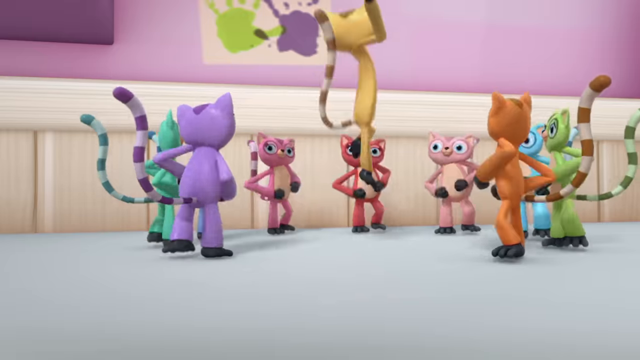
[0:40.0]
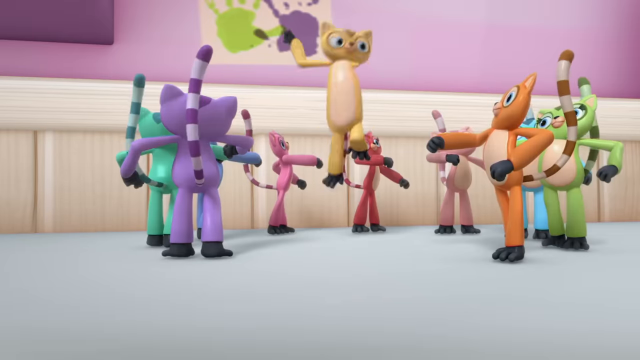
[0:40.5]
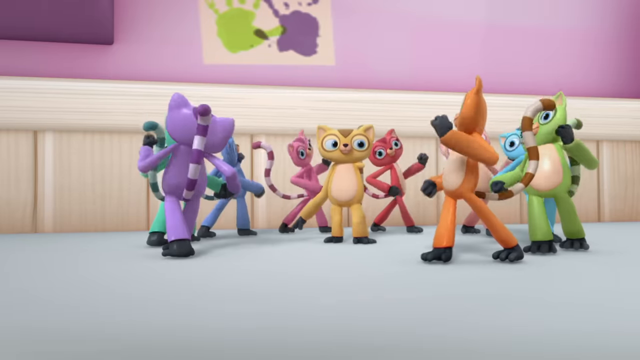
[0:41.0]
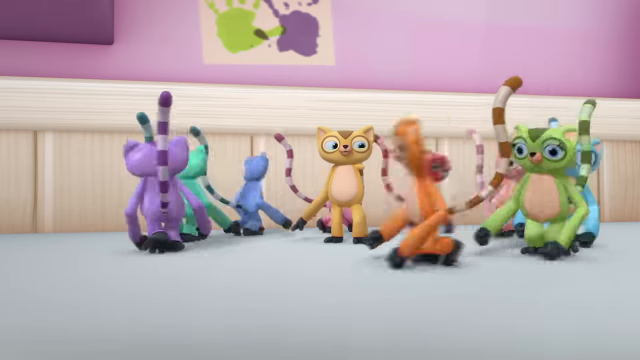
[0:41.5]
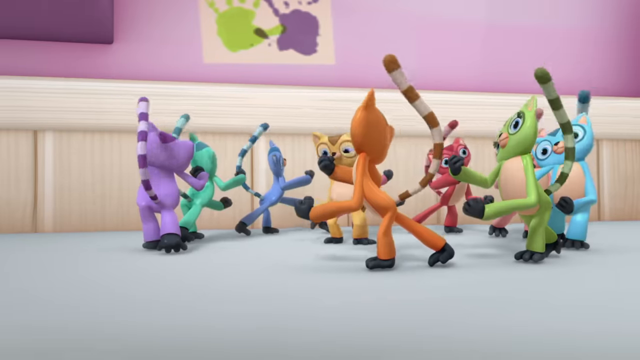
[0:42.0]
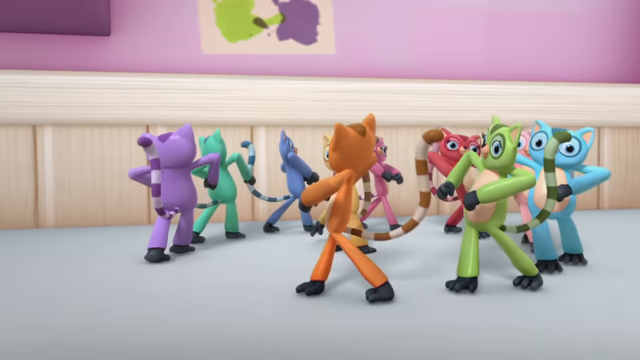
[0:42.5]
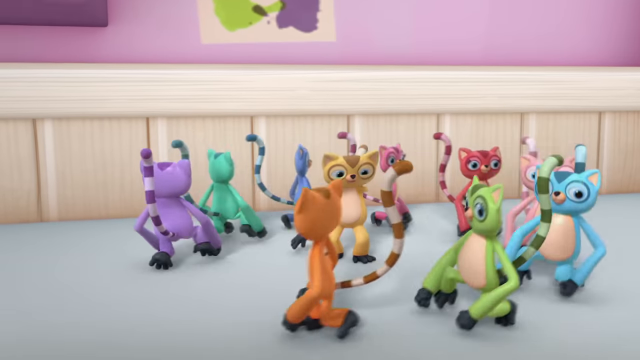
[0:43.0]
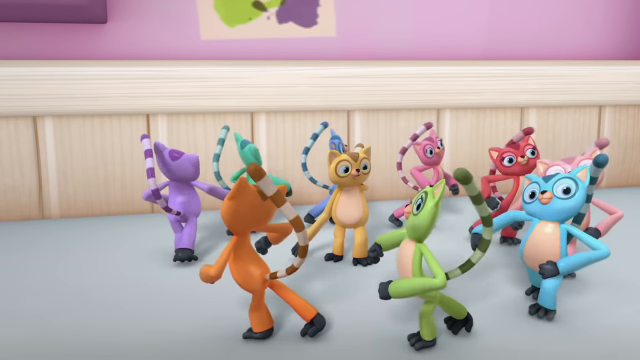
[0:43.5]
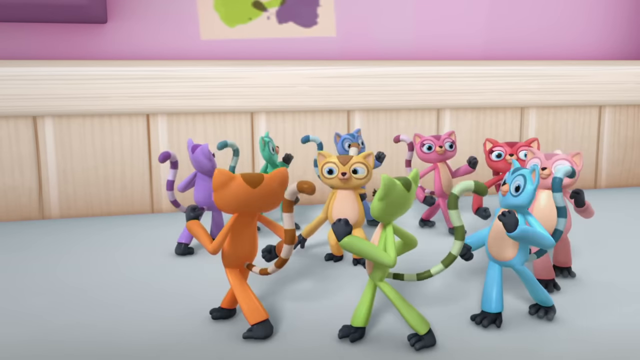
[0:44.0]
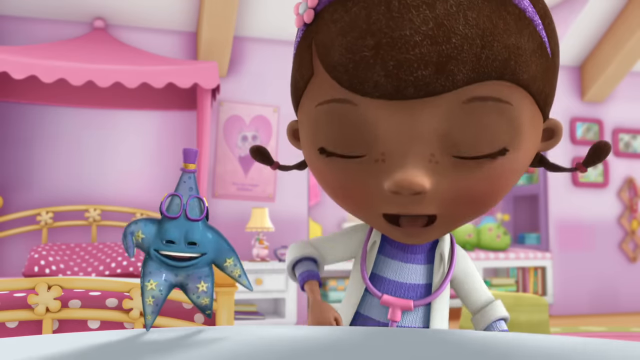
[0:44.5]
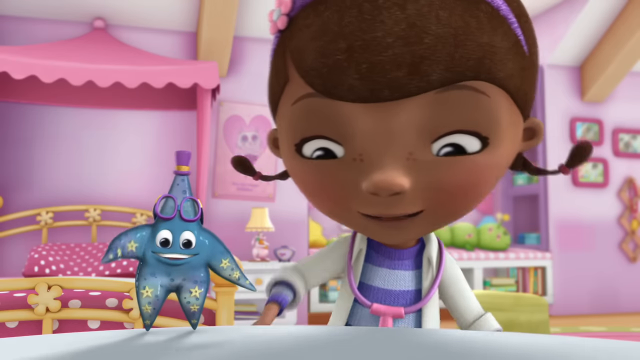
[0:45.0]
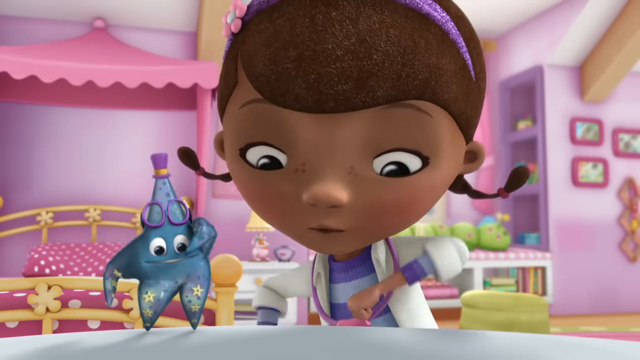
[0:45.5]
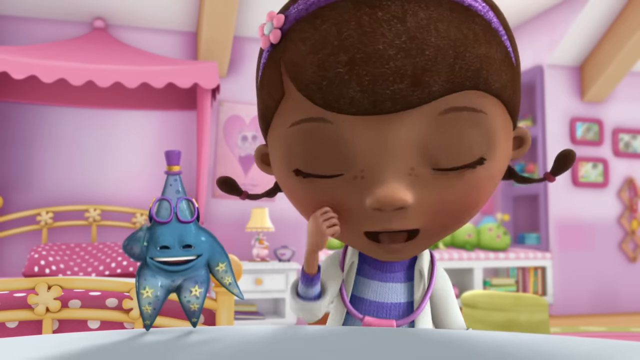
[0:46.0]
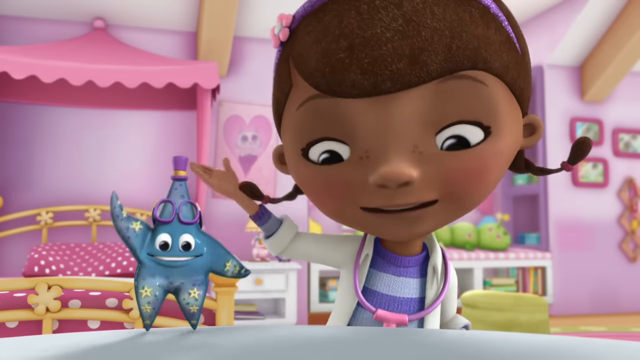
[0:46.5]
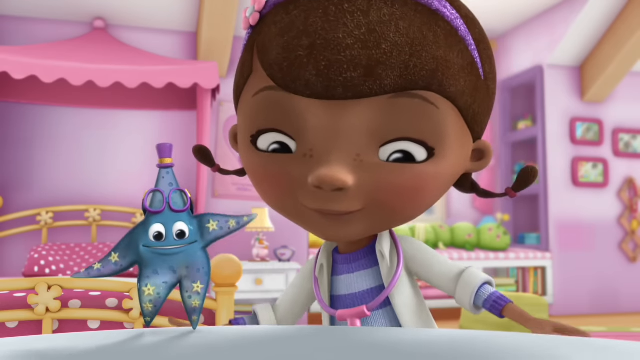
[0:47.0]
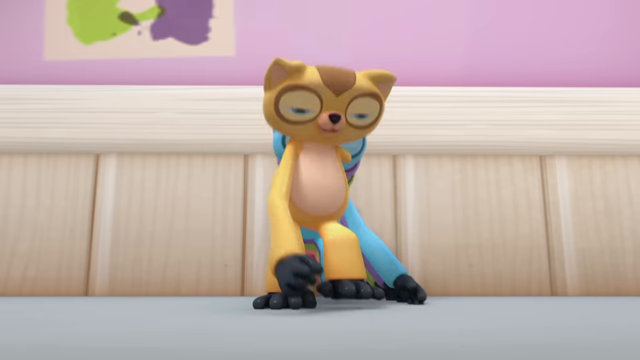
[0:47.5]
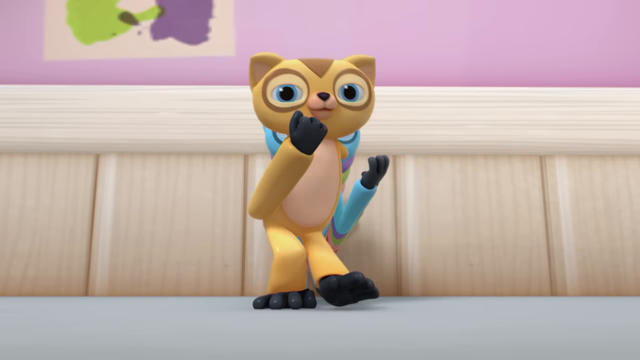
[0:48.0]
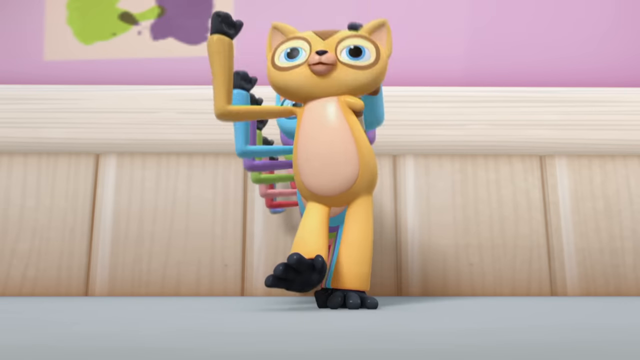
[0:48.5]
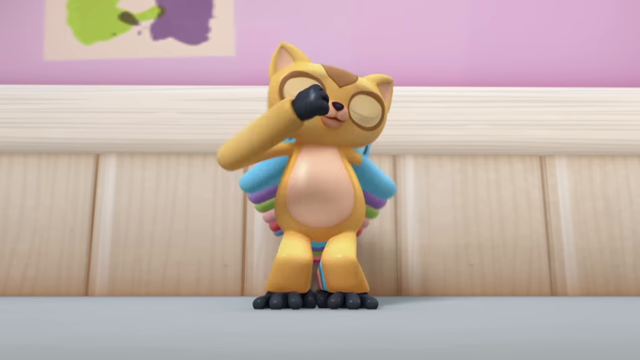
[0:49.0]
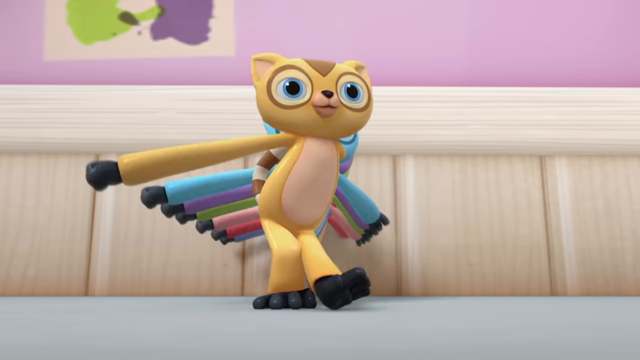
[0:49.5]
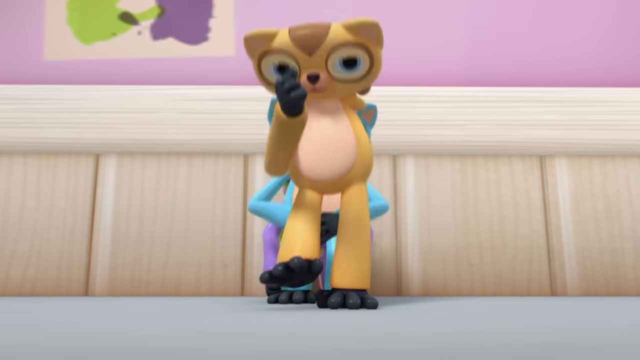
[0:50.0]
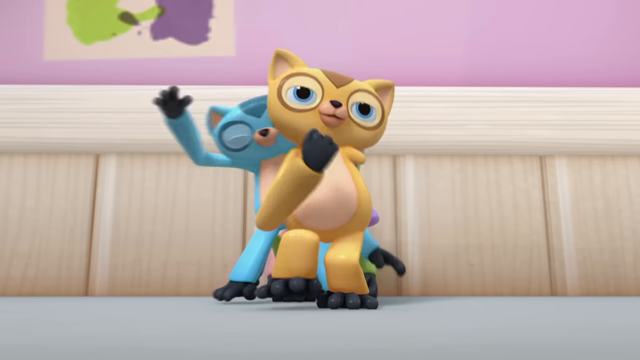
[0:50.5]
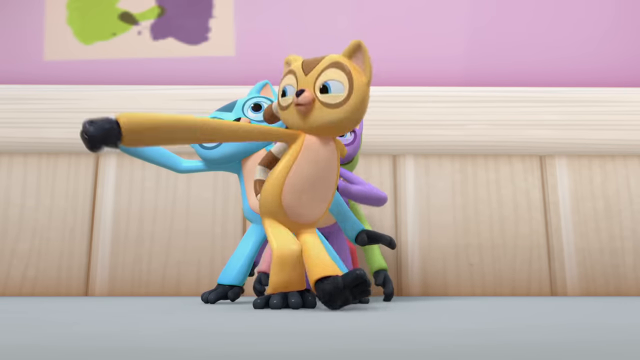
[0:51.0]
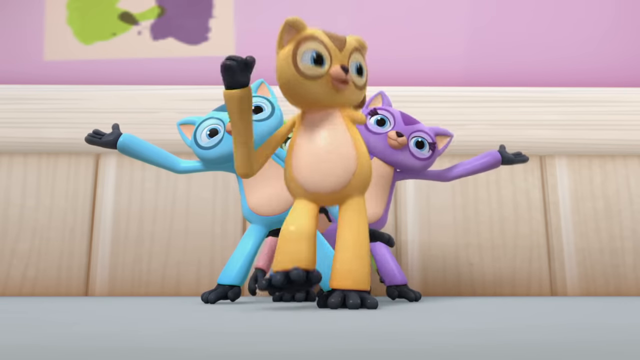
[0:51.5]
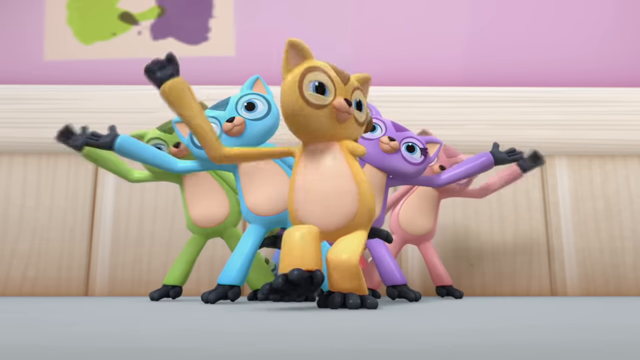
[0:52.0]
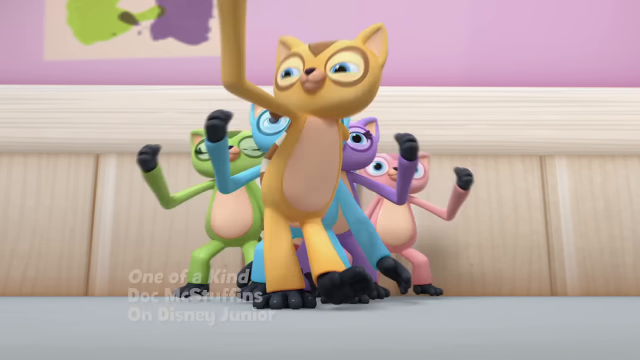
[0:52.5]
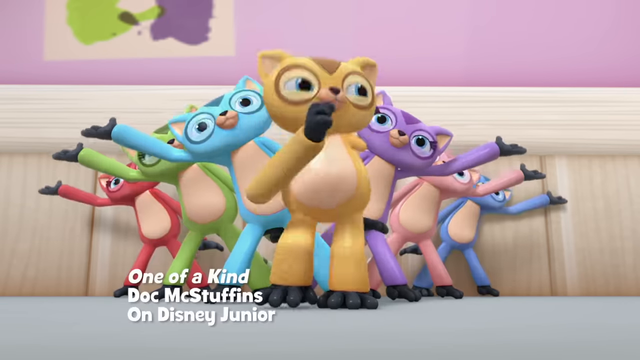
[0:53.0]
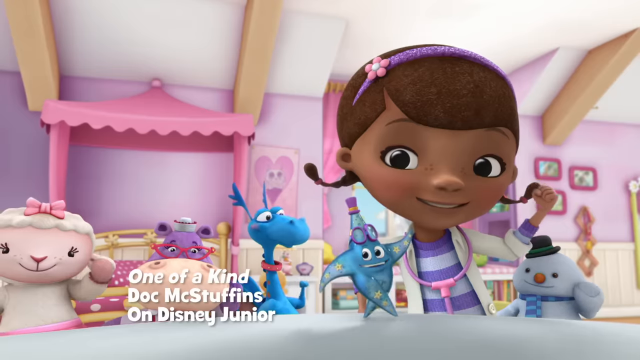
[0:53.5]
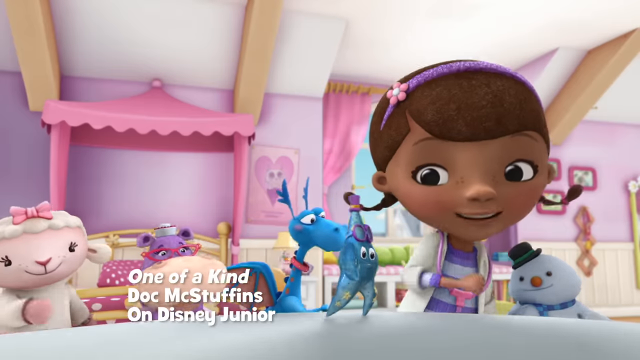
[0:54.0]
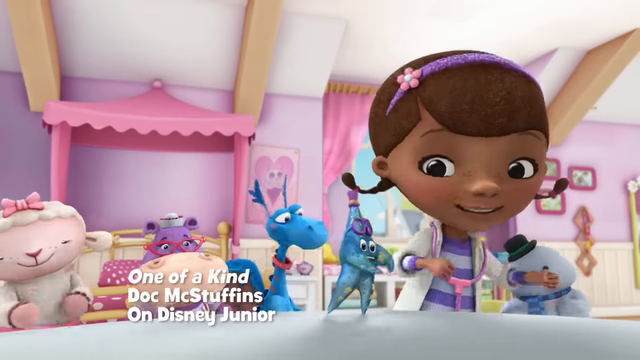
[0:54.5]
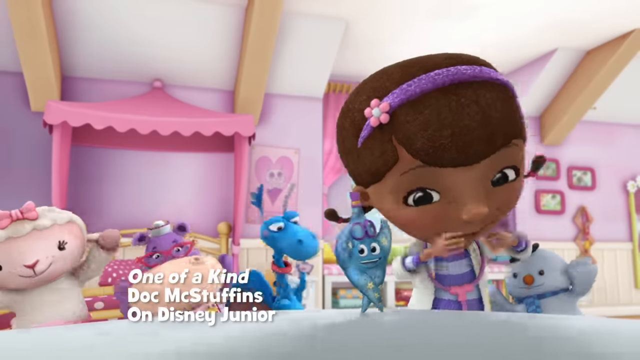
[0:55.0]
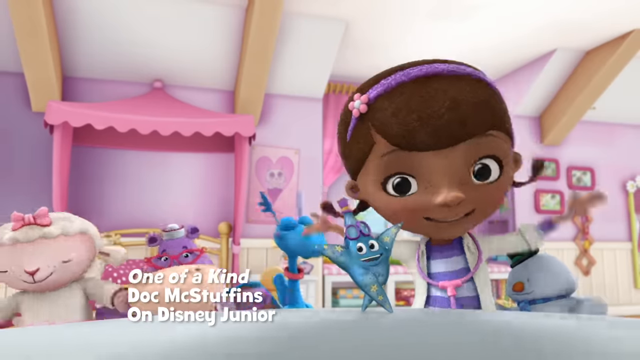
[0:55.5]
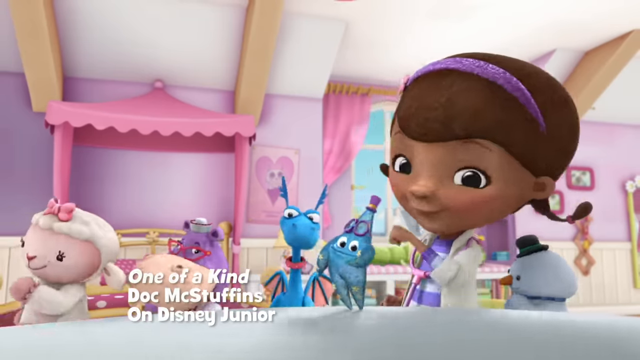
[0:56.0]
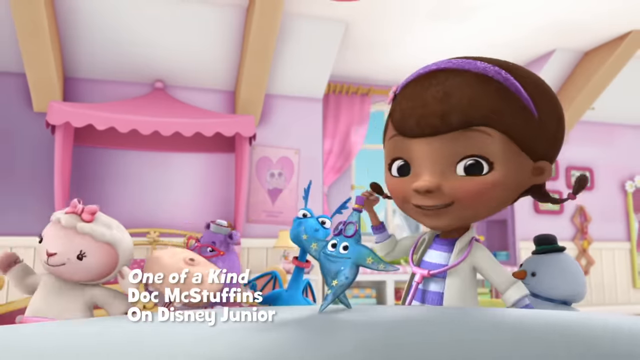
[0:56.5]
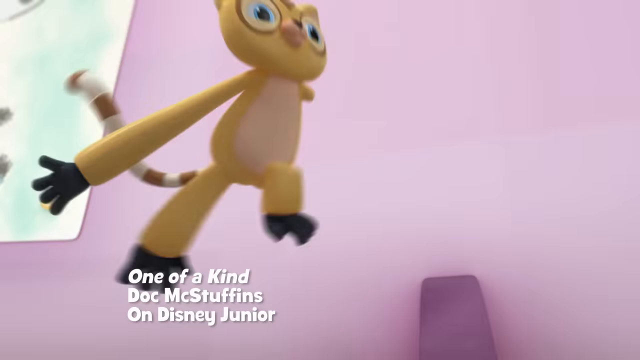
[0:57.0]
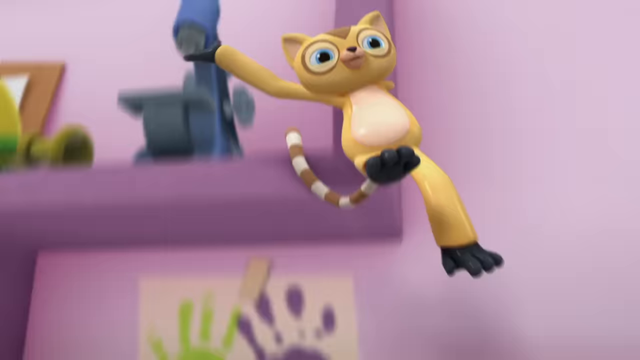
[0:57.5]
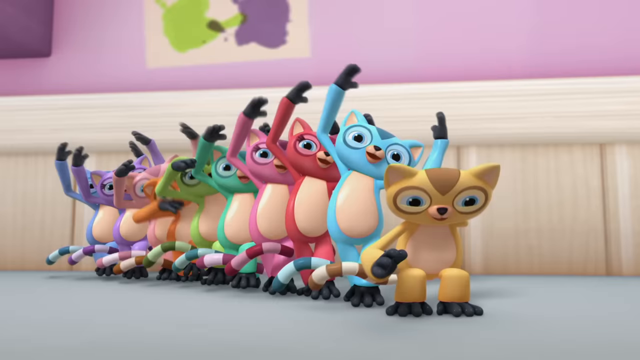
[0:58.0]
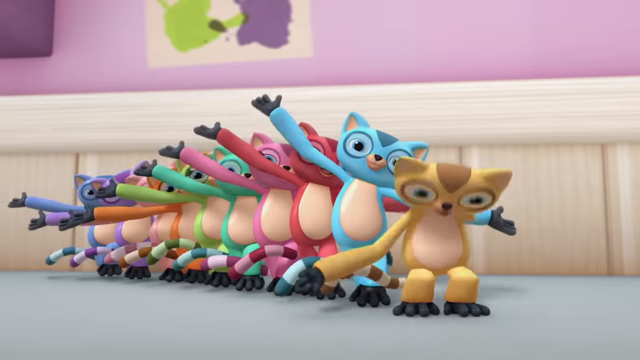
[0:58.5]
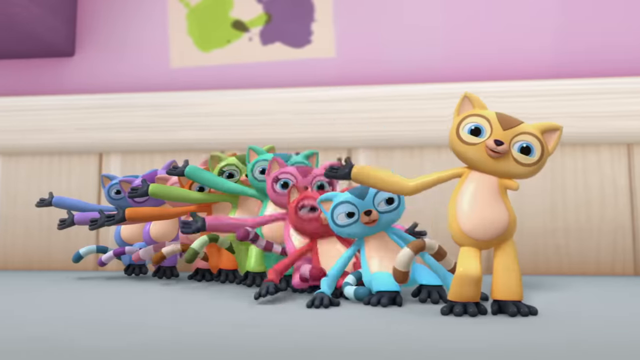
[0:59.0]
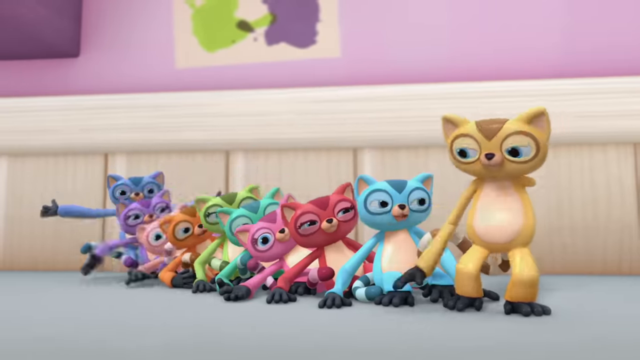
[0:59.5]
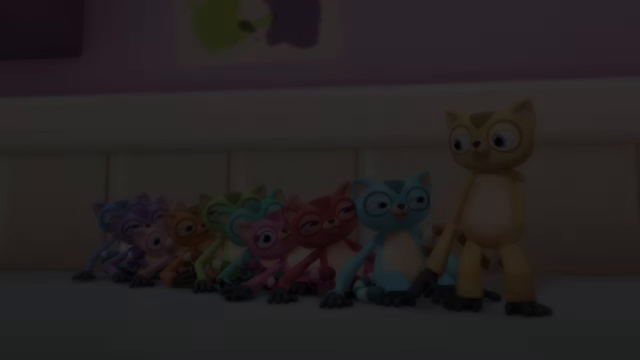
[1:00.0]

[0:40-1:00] Many lemurs, about 15, dance together in a straight line, performing for the girl and the biggest animals. Then the girl dances with the sheep and the star, and the dragon and the snowman are there too; everyone is dancing. After that, the lemurs are in a perfect line again. The title appears again: "One of the kind by Doc McStuffins on Disney jr". In the background are the girl's bed, pink walls, wooden constructions, and white add-ons on a wall.